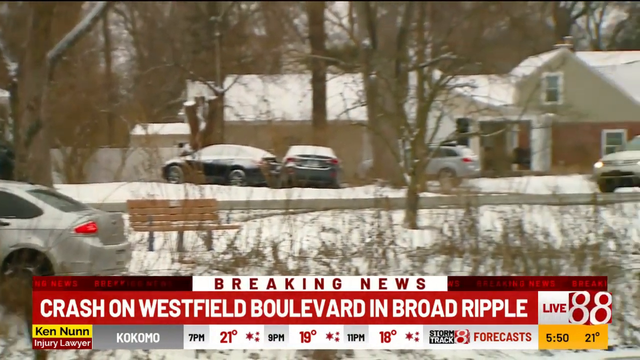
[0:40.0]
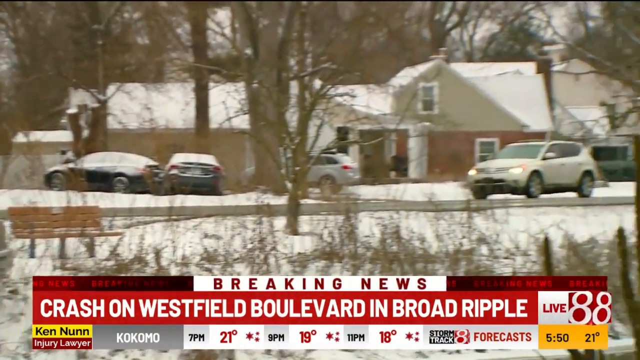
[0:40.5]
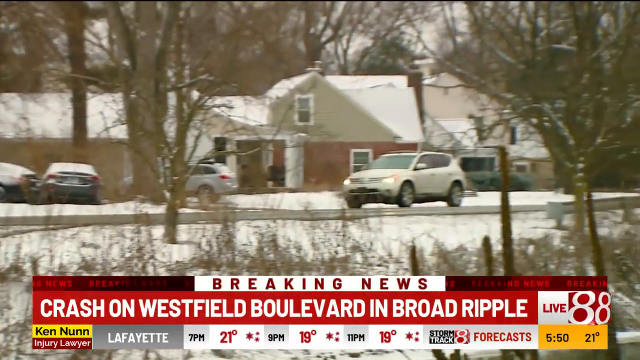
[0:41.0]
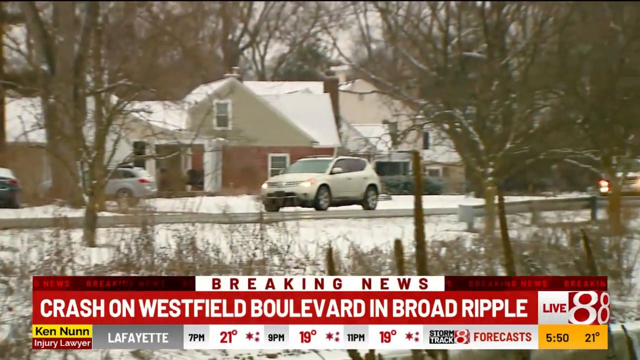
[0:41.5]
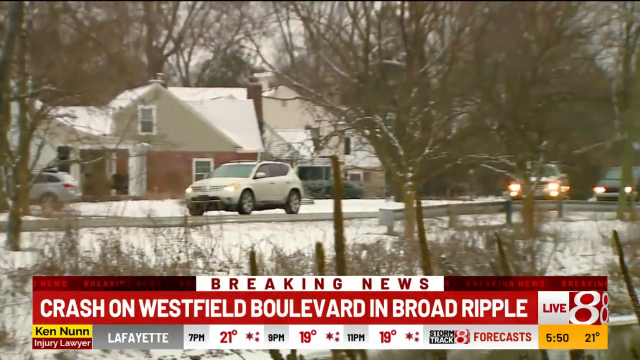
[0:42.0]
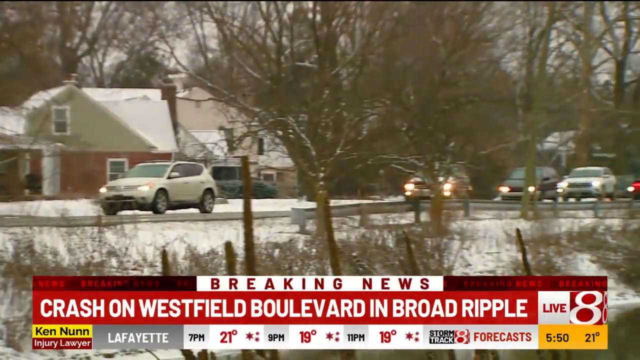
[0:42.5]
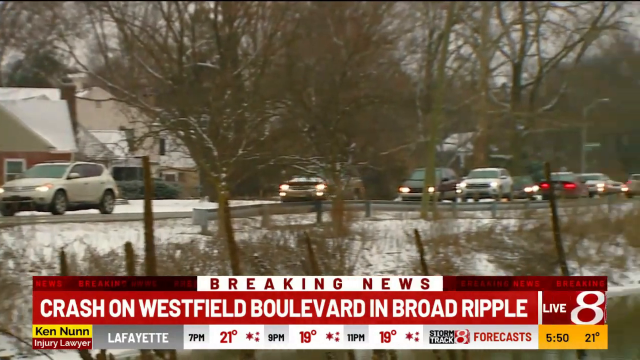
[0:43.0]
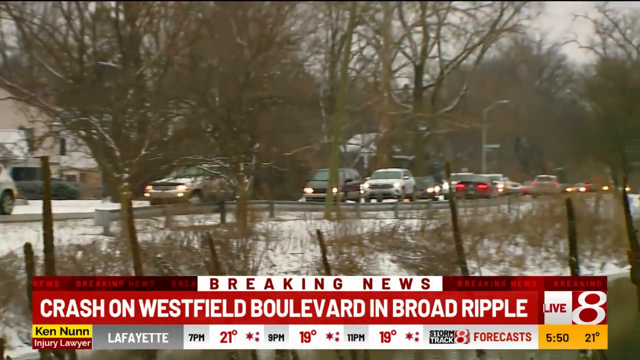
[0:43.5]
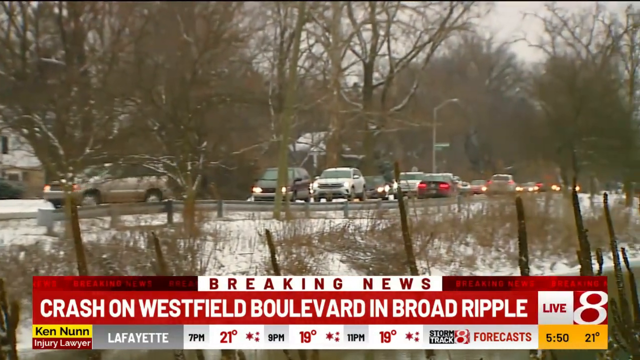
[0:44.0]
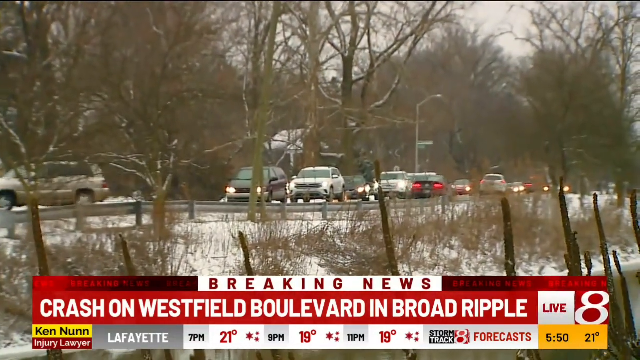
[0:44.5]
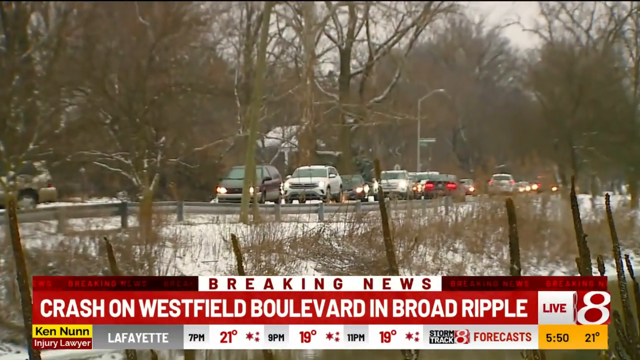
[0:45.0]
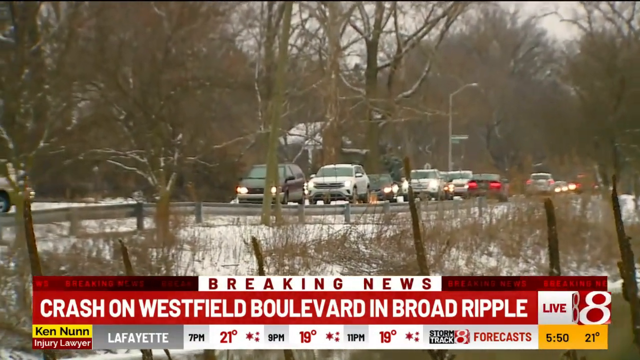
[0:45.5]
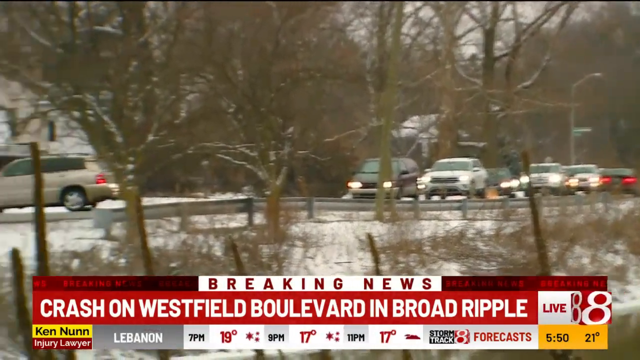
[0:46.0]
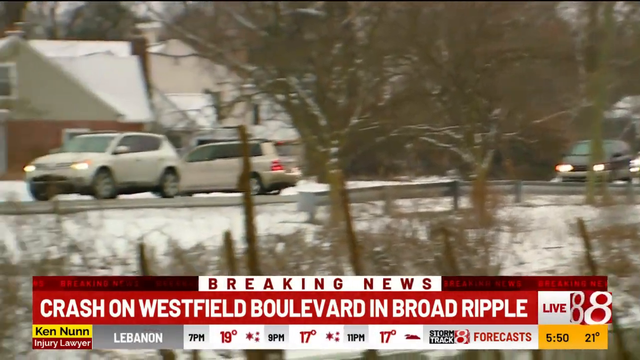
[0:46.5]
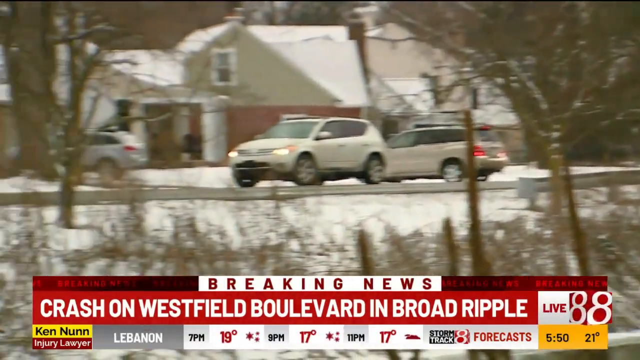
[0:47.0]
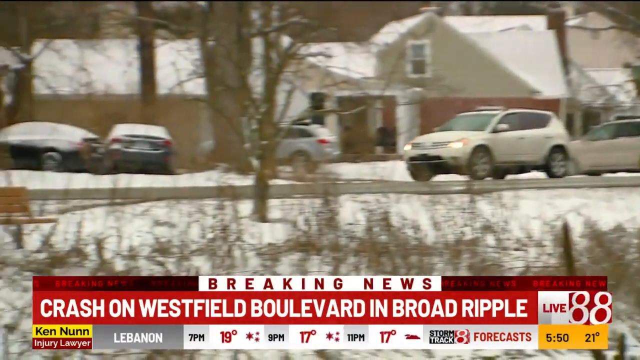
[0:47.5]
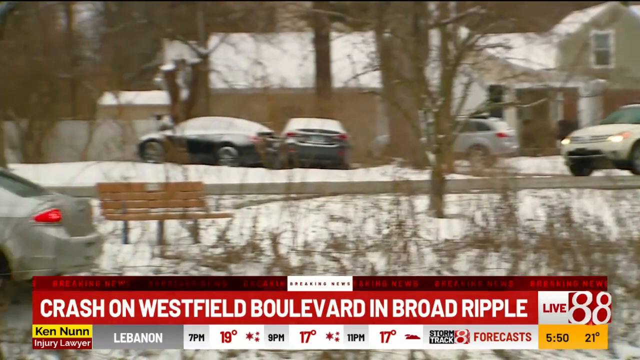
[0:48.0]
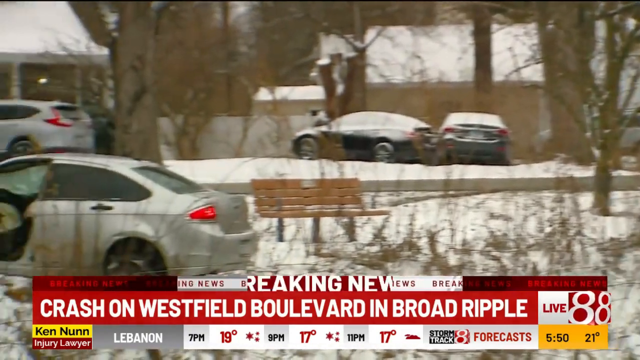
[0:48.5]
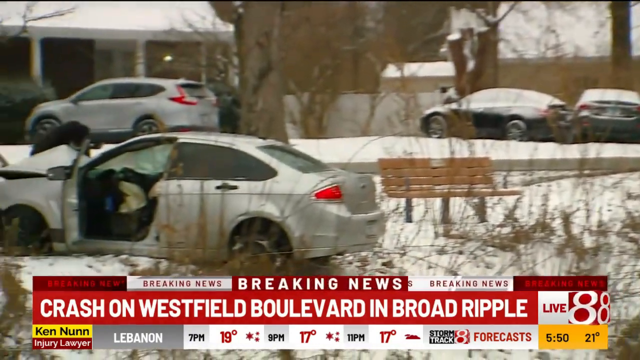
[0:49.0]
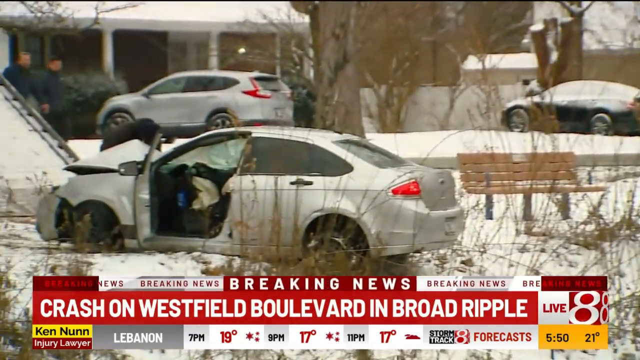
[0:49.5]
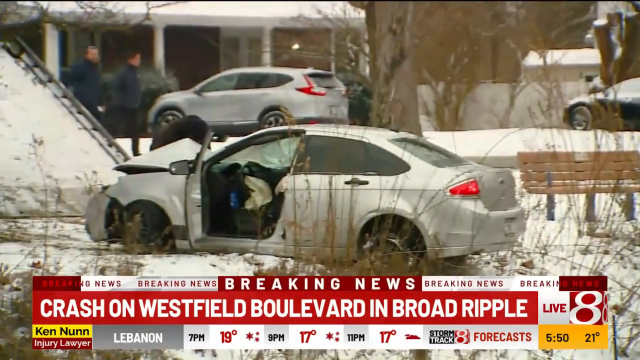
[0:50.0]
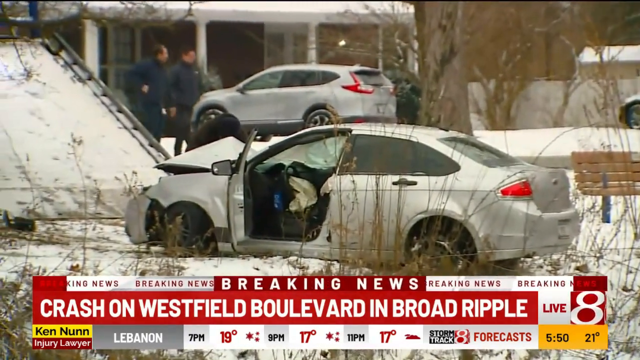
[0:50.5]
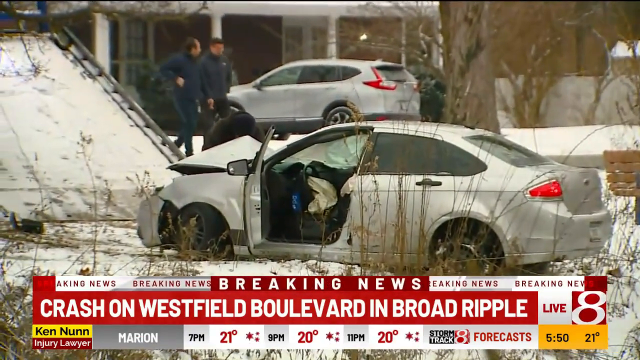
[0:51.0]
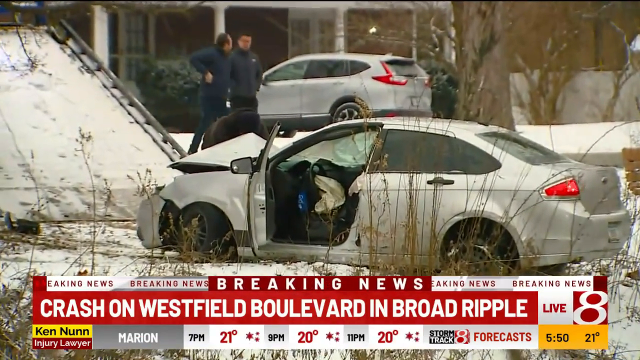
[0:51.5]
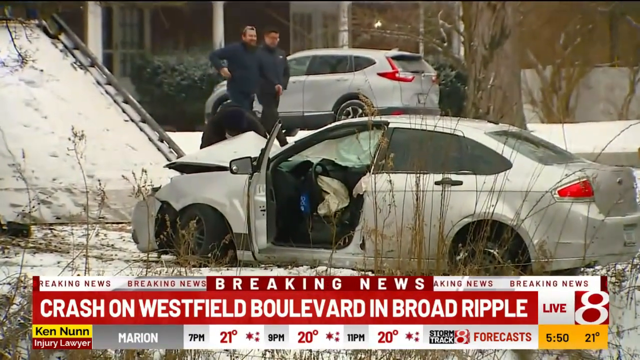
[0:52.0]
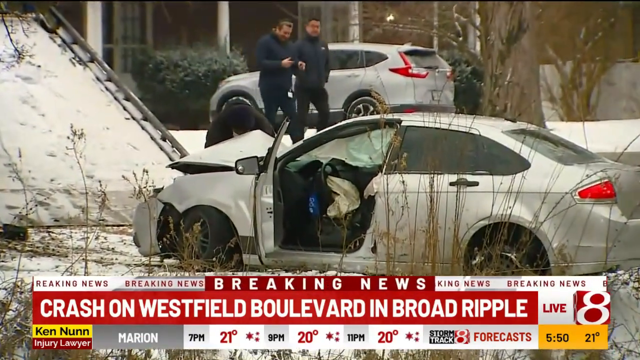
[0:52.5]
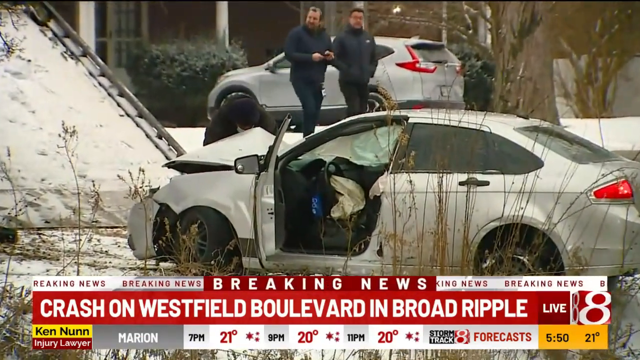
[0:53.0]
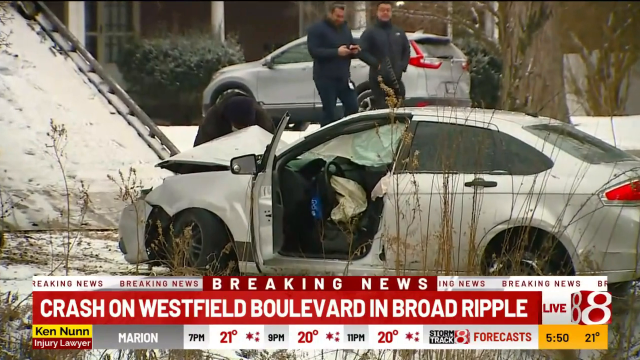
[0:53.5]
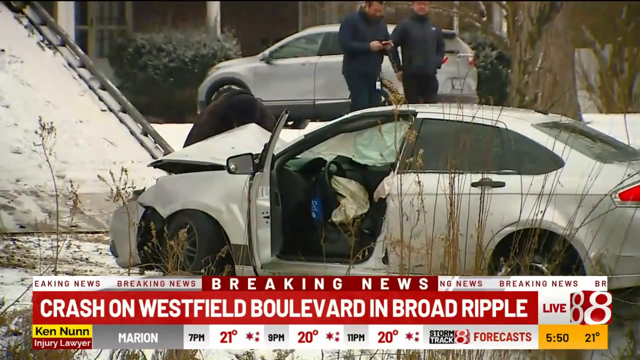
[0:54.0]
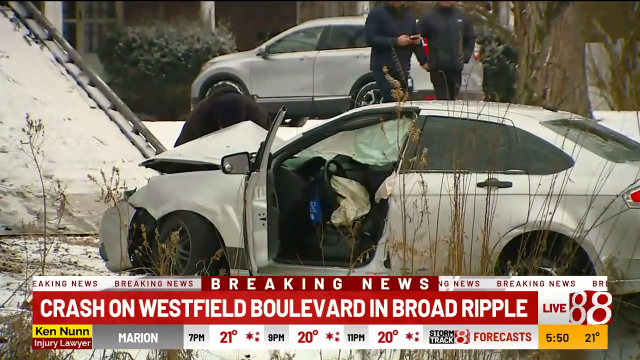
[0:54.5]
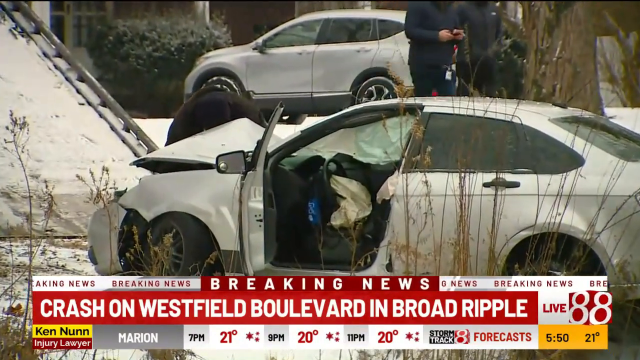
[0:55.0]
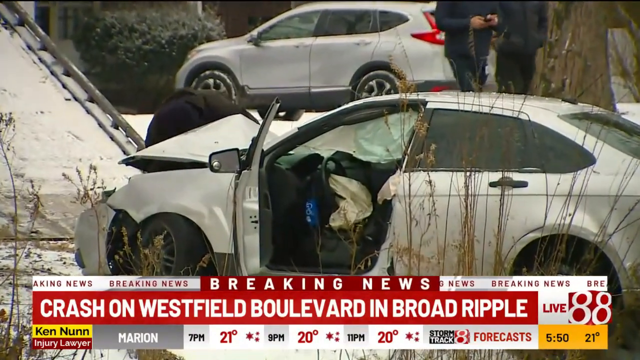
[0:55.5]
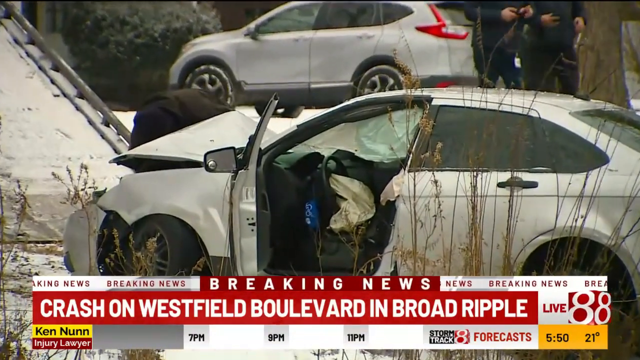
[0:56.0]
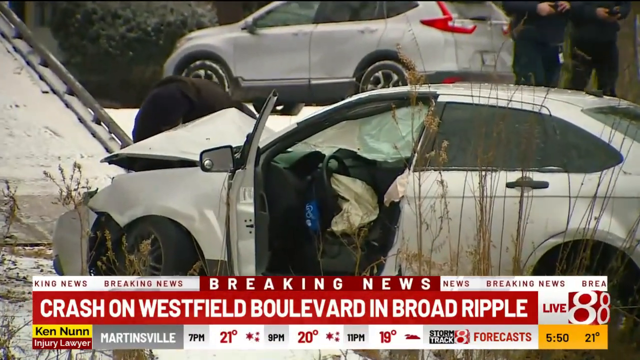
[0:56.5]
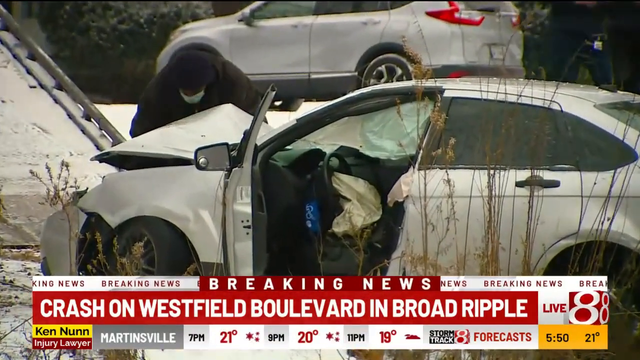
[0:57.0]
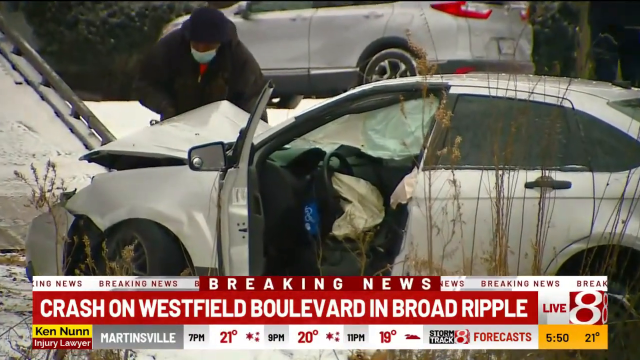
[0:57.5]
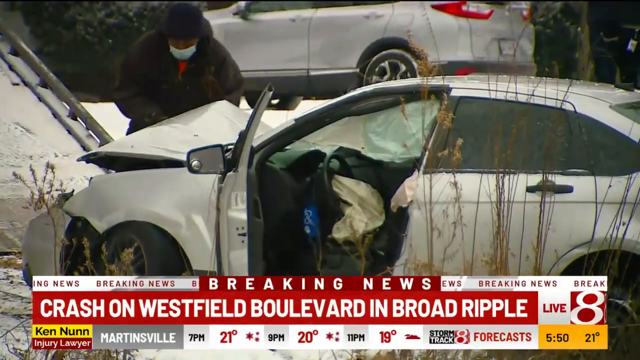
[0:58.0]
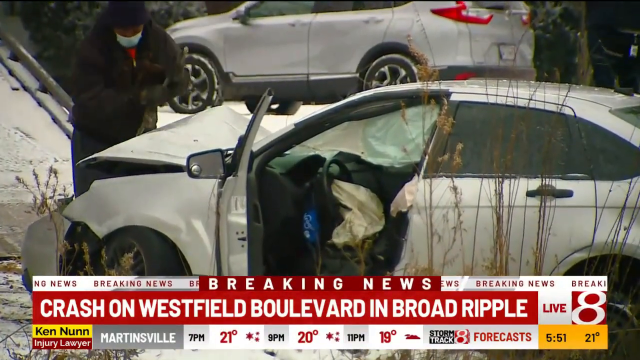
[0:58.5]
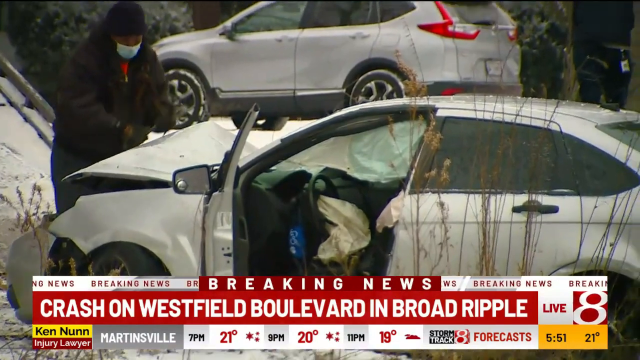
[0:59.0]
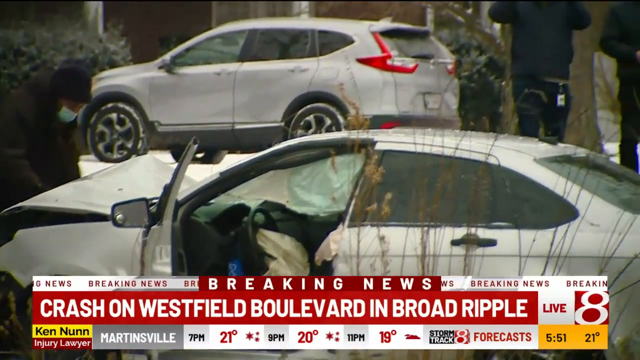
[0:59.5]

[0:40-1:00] The headline reads "Breaking news. Crash on Westfield Boulevard in Broad Ripple." Cars are on the road, which looks very busy; they appear to be held up because of the accident. The camera zooms in on the car, which has been in an accident: its front end is badly damaged and its rear end is very close to going off the riverbank and into the river. The passenger-side door is open, and the airbag appears to have been deployed. Zooming in further, a man is working on the car, trying to get it onto a recovery vehicle. The scene is very icy.